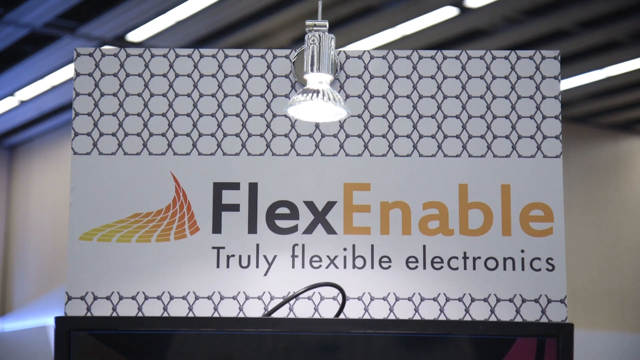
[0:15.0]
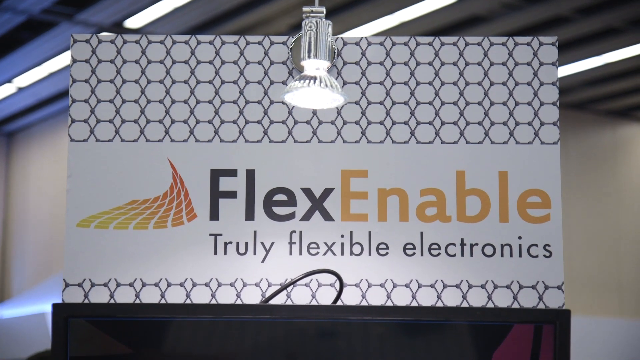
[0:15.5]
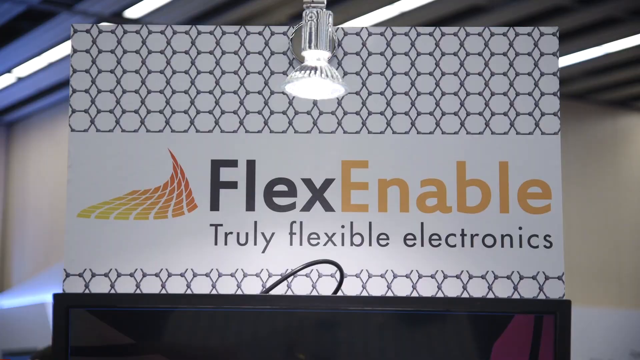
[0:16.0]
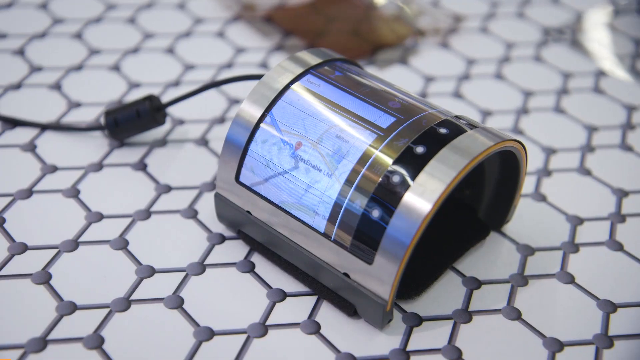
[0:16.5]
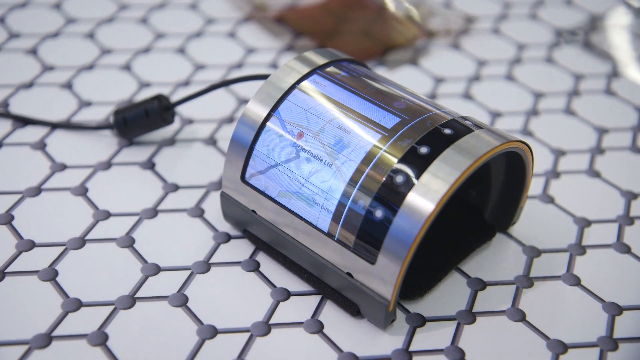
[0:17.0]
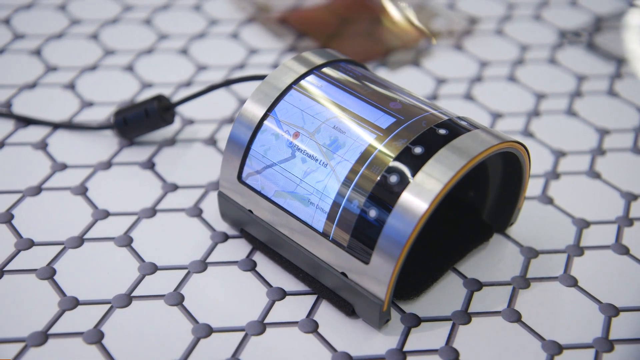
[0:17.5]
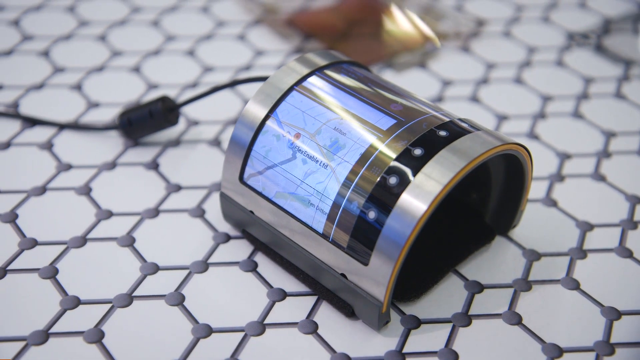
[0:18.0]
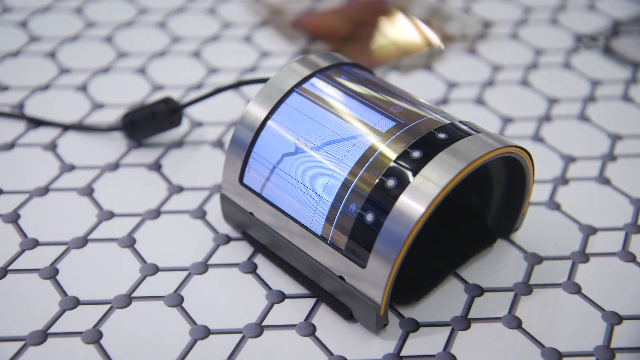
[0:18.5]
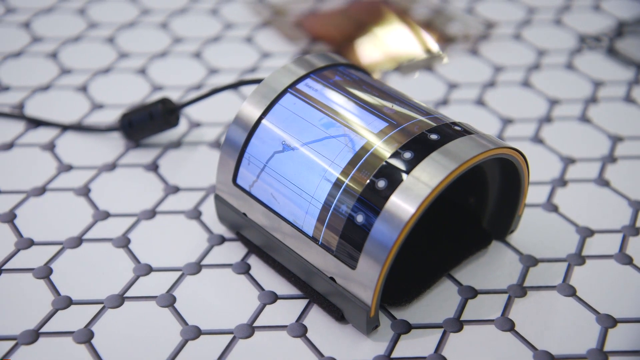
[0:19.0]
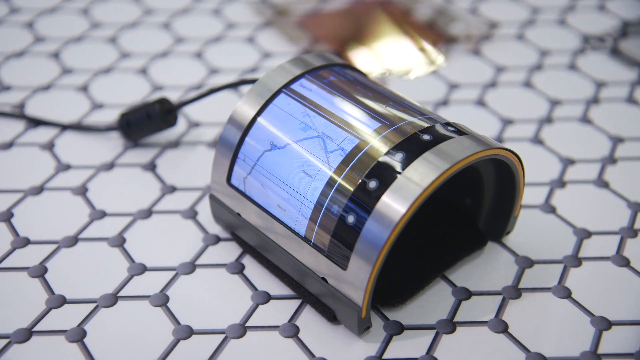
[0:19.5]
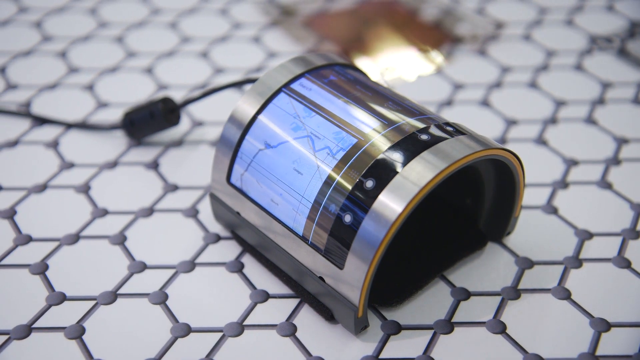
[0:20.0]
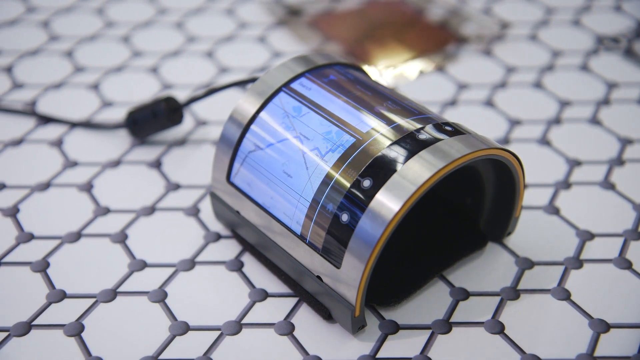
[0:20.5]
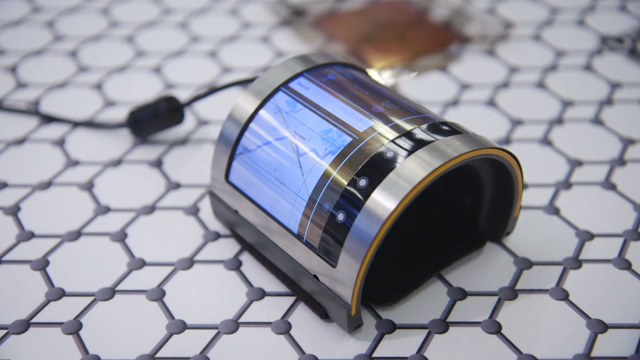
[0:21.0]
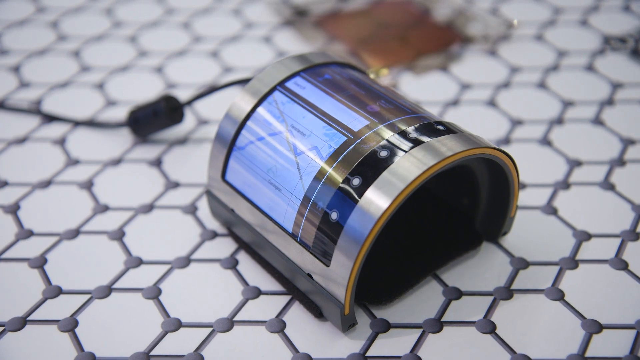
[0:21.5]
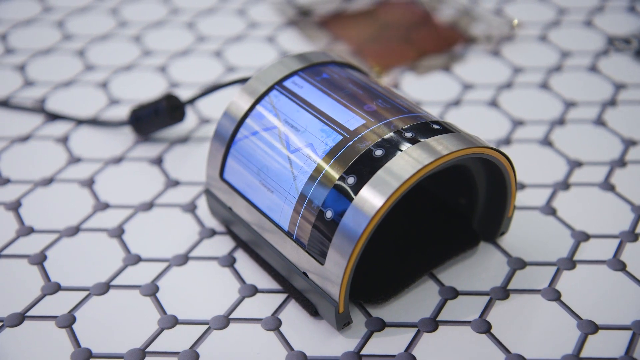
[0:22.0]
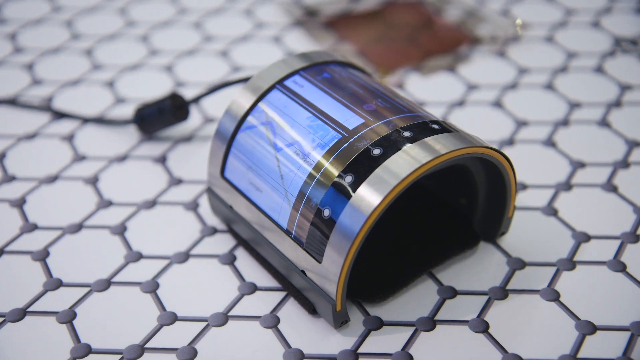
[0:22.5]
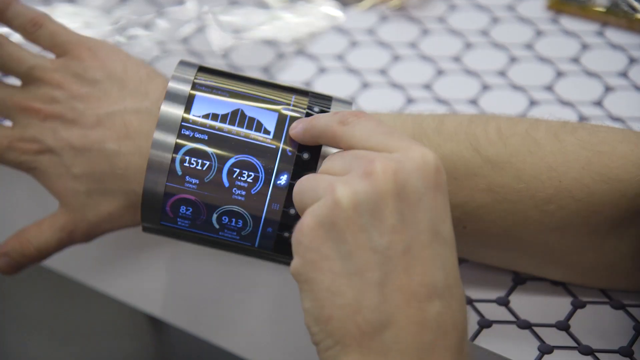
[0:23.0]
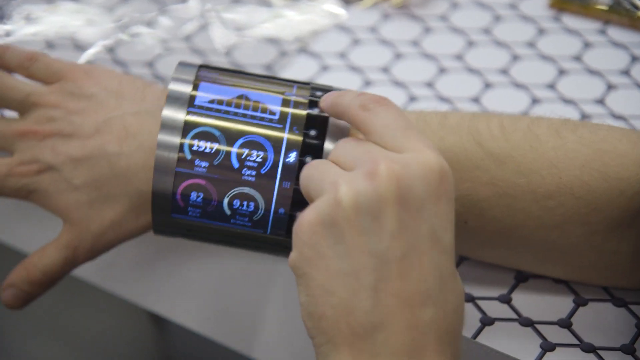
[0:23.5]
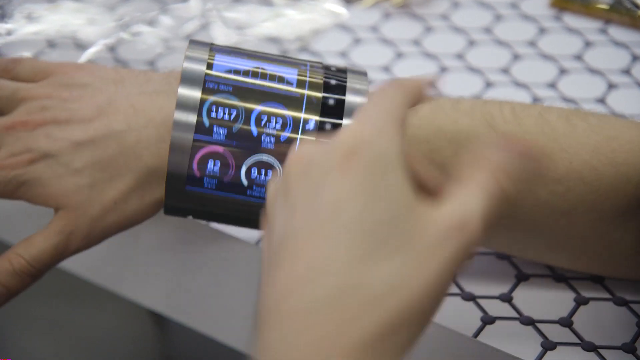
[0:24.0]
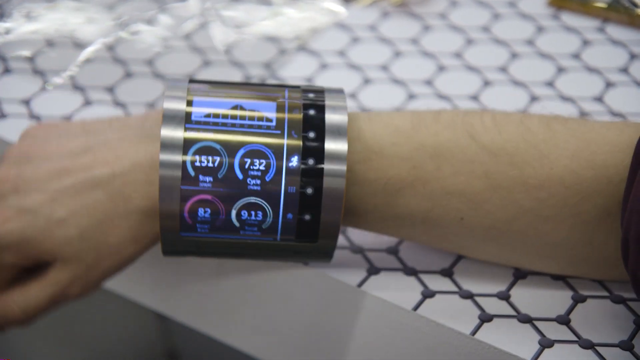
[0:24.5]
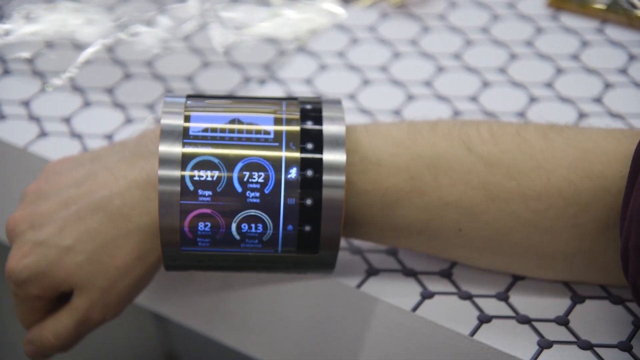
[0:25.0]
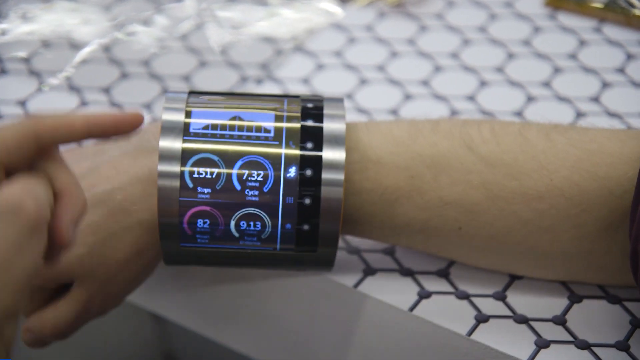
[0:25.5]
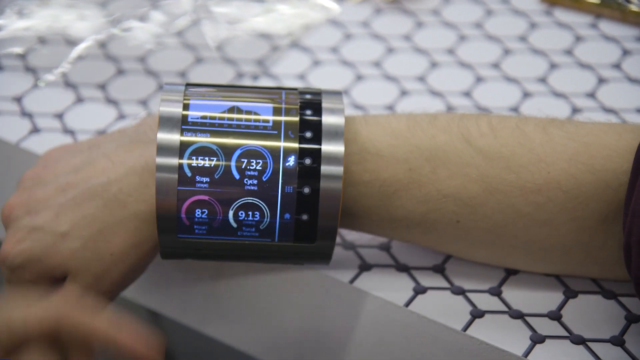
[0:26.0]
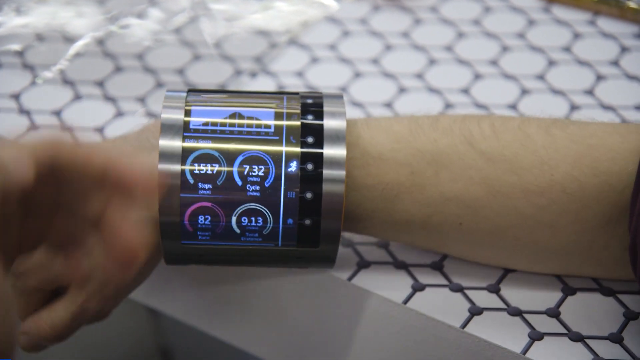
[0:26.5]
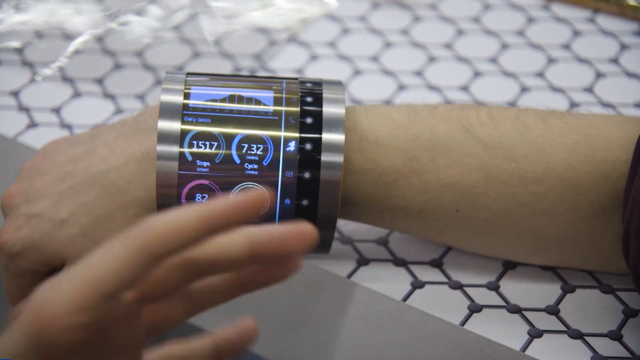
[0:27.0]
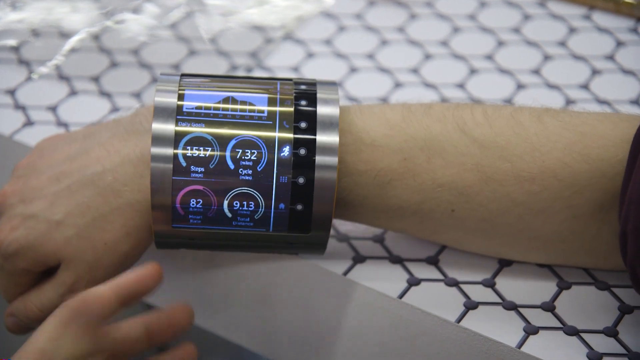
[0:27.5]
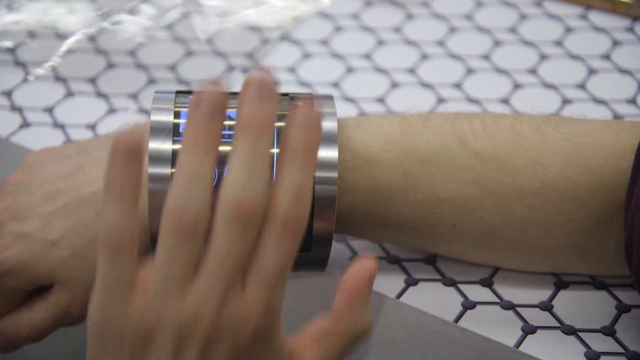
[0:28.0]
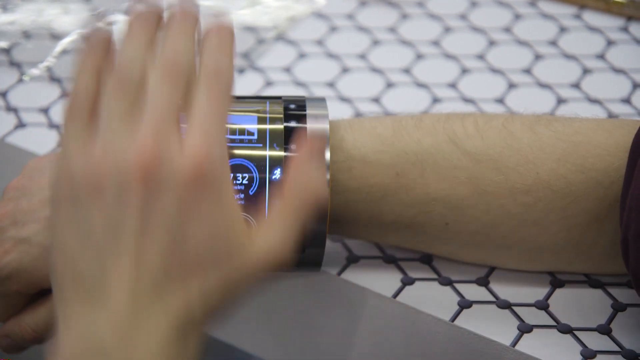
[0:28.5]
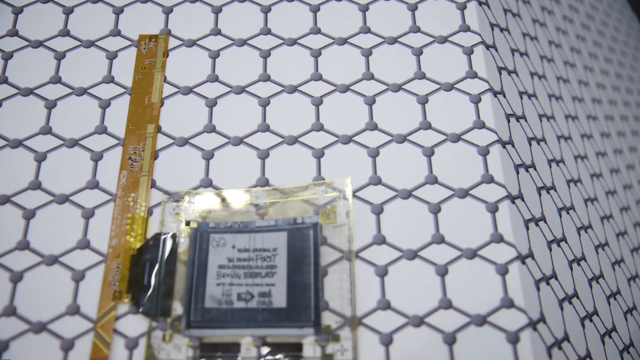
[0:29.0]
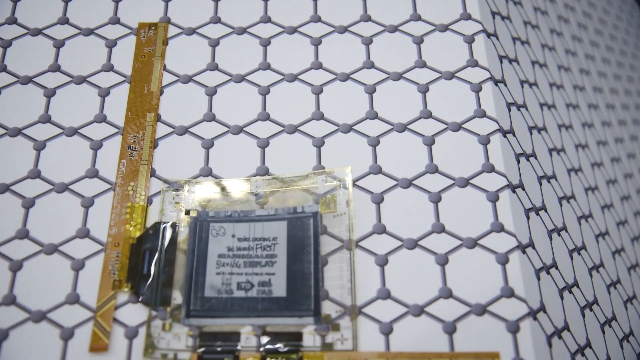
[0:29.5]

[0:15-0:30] A man's arm appears, with a wristband on his wrist that shows all kinds of different graphs and types of technology the wristband can display. He pushes different buttons and changes different settings on the wristband. Then text says "flex enable truly flexible electronics," apparently the place where they are. The arm with the wristband is laying on a white table covered in black hexagon shapes that connect to one another. A piece of tech in a plastic bag is then shown laying on the table.